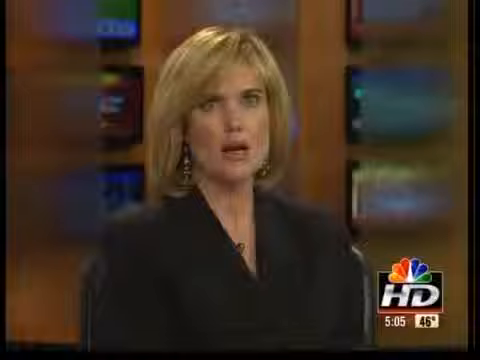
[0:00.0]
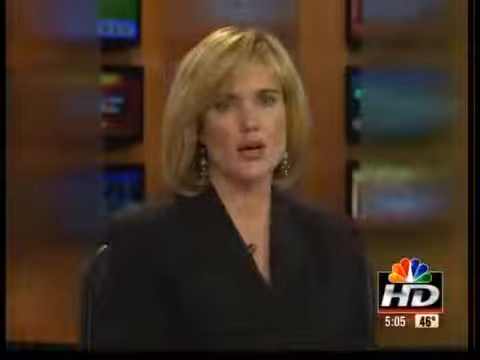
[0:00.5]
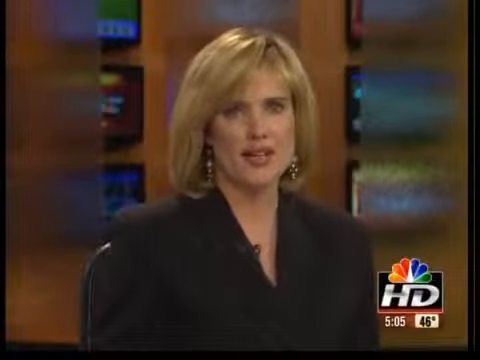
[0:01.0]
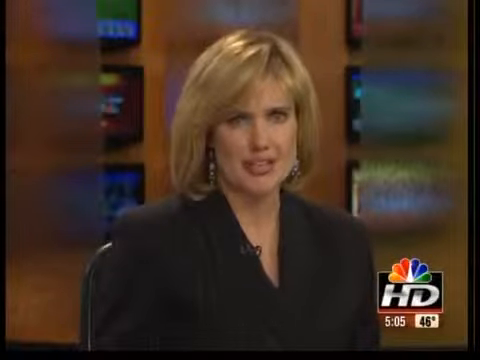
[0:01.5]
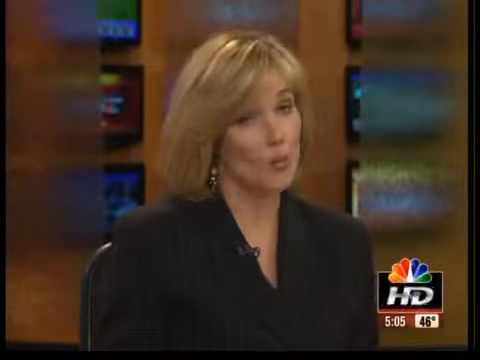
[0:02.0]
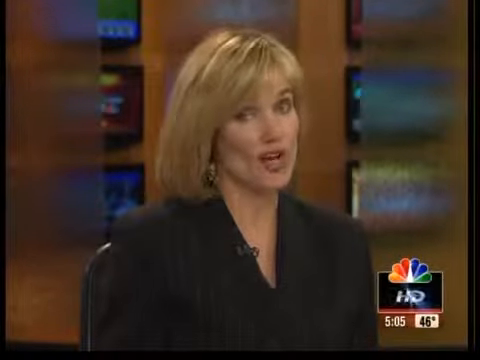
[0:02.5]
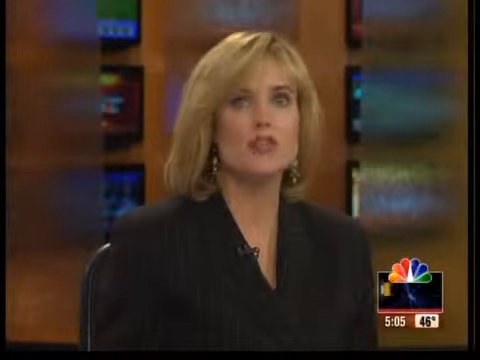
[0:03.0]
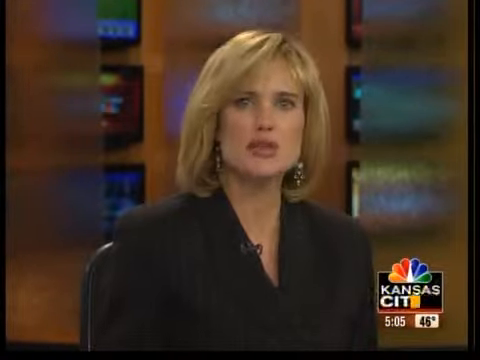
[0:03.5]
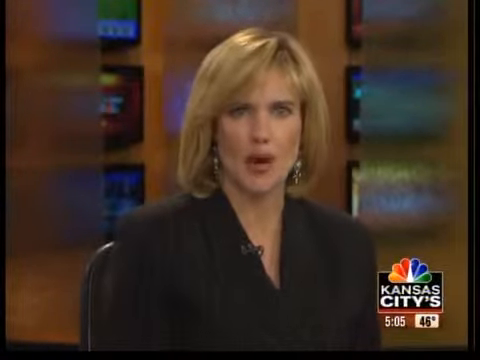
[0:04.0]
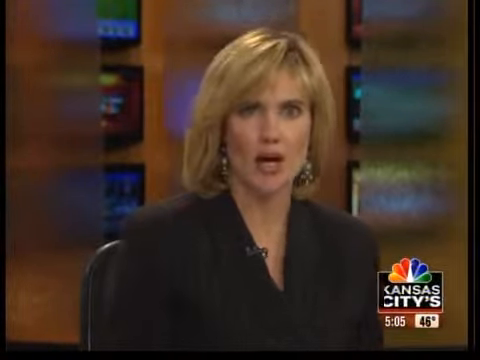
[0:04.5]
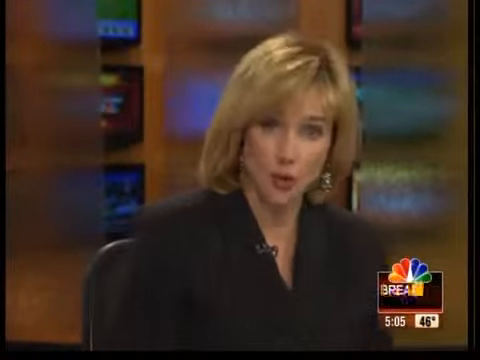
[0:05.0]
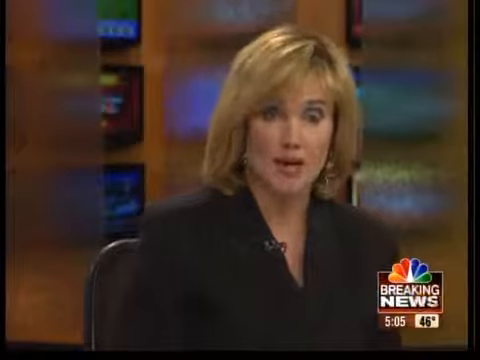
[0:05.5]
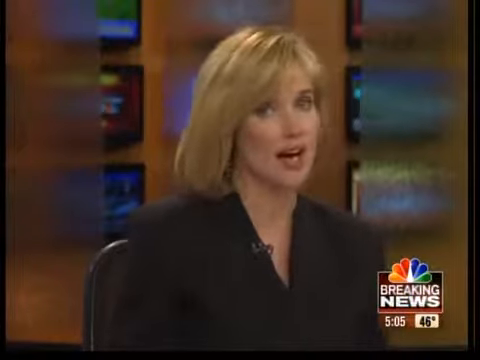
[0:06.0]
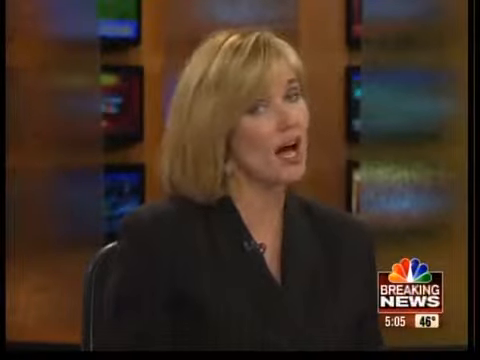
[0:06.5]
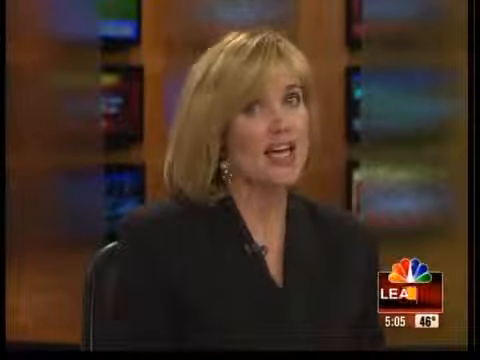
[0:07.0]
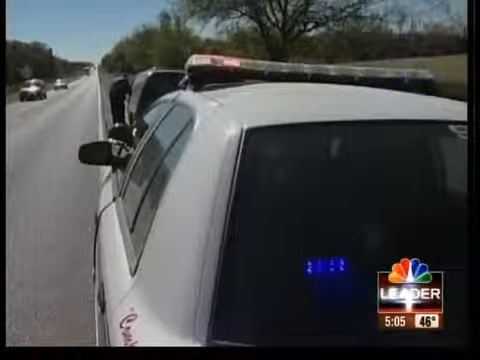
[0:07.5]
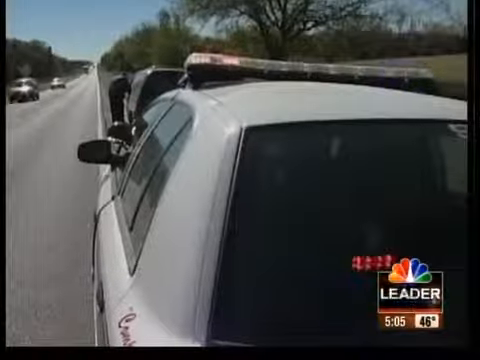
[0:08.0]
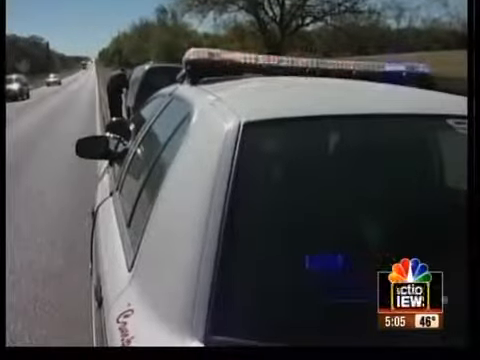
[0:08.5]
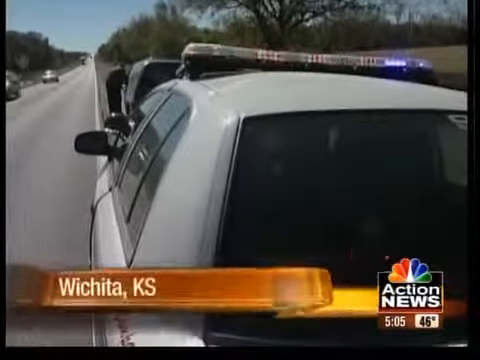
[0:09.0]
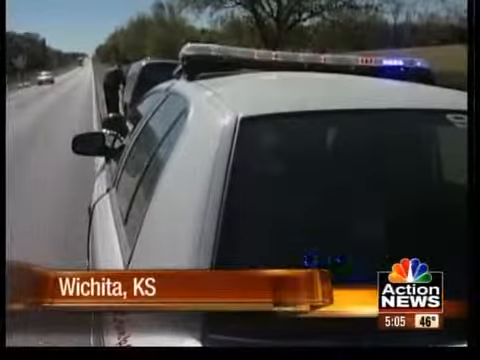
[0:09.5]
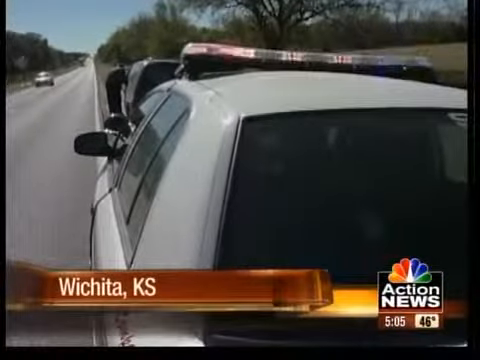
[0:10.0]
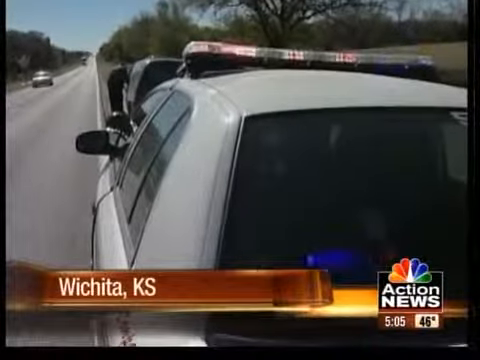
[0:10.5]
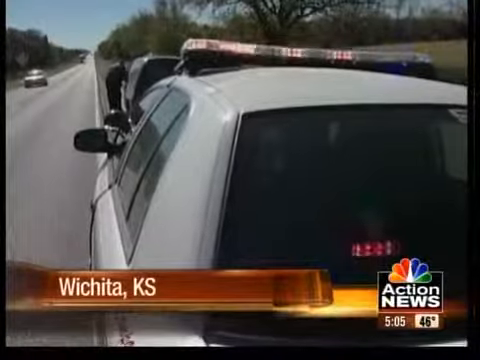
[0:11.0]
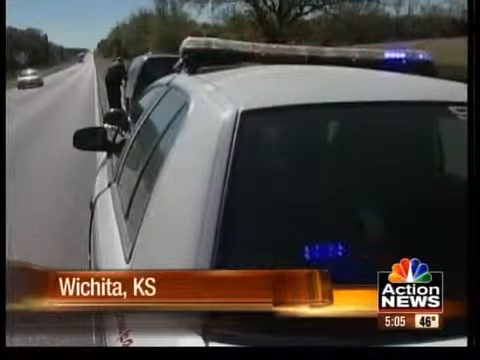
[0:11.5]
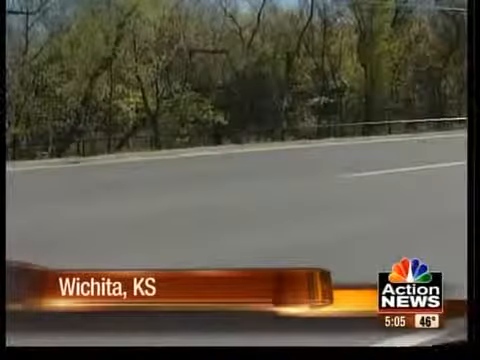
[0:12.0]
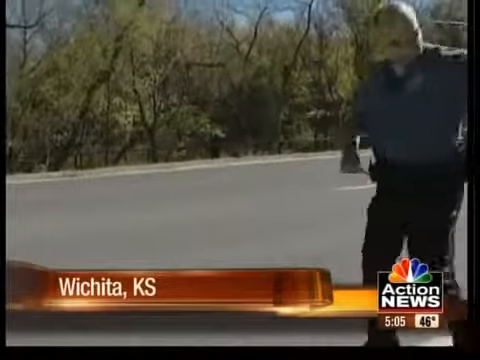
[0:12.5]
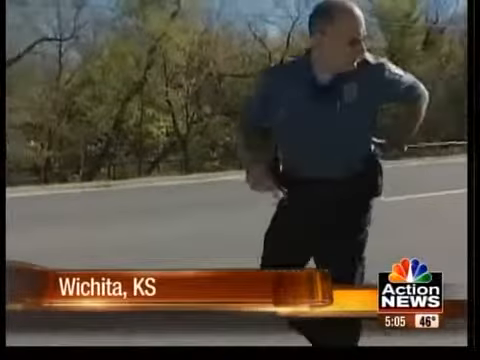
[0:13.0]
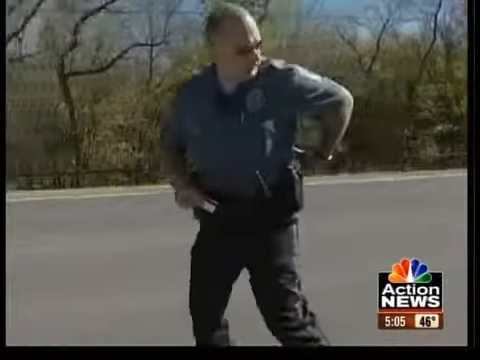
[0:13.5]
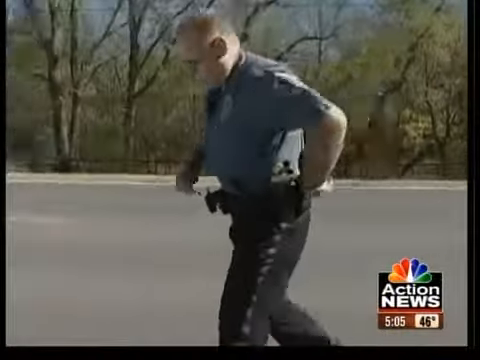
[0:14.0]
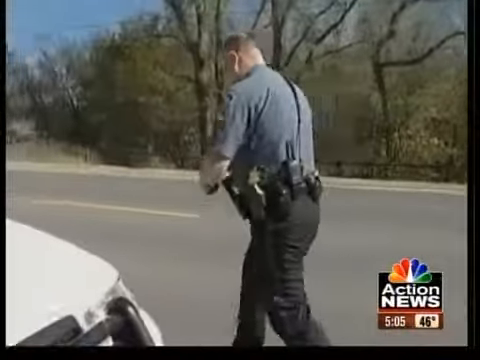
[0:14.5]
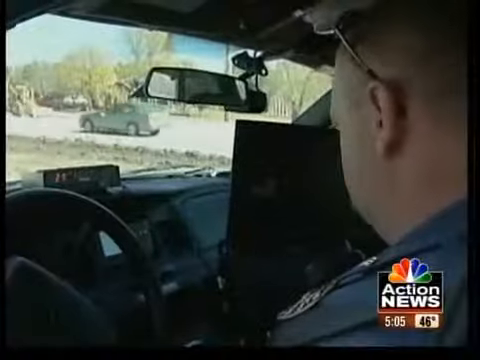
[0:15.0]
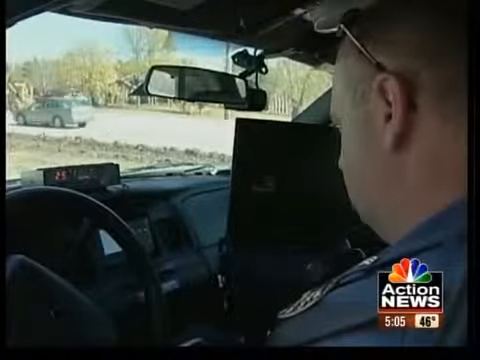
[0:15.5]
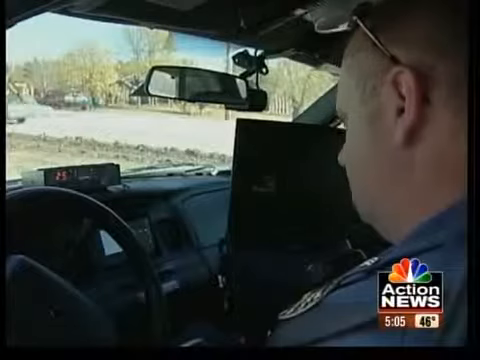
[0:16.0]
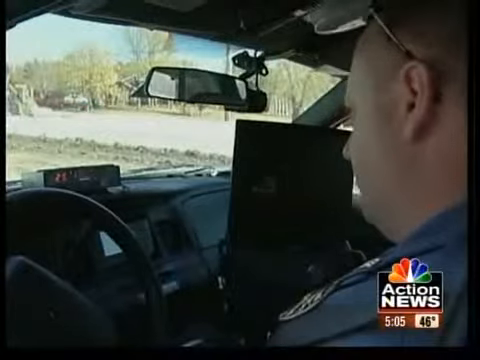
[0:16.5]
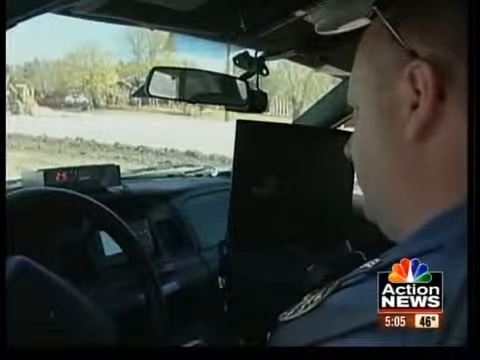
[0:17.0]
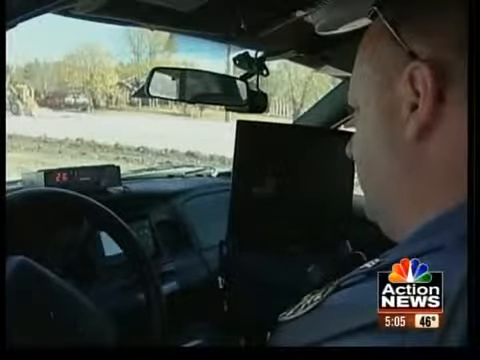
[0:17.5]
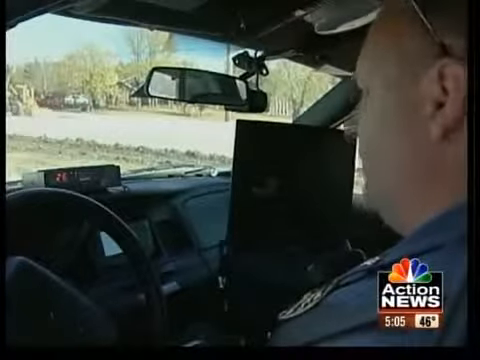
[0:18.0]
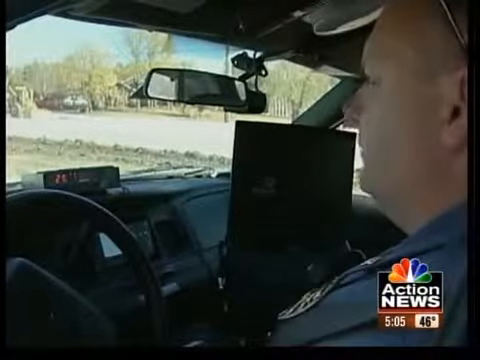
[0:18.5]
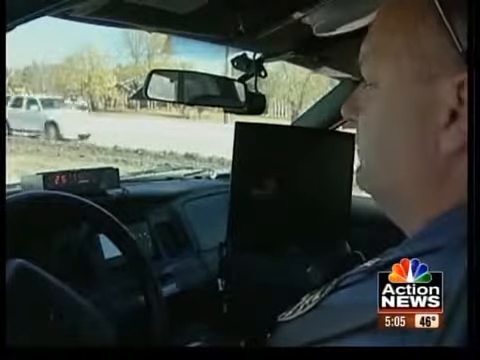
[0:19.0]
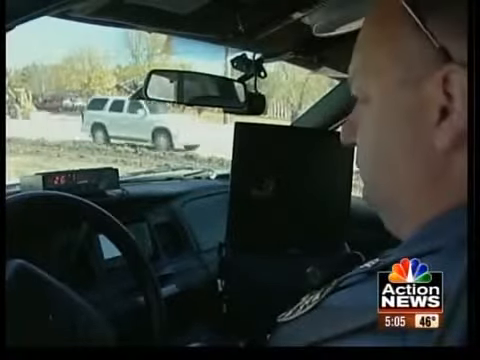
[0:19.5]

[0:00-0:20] A white woman with blonde hair and blue eyes, wearing makeup, appears in a black suit with a microphone on it. She has noticeable earrings. At the bottom of the screen there is a sign or image that looks like it is for NBC, an American network, with the letters "HD" underneath it. The woman seems to be mid-speech and speaks slightly animatedly. As she speaks, the video cuts to police officers on the side of a highway. One officer is out of his vehicle, speaking to what looks like a vehicle he has pulled over, with his head bent down.